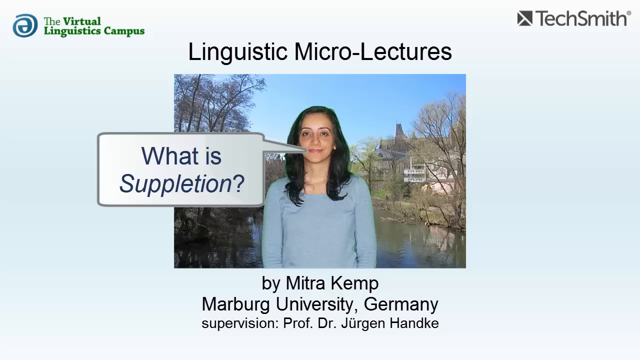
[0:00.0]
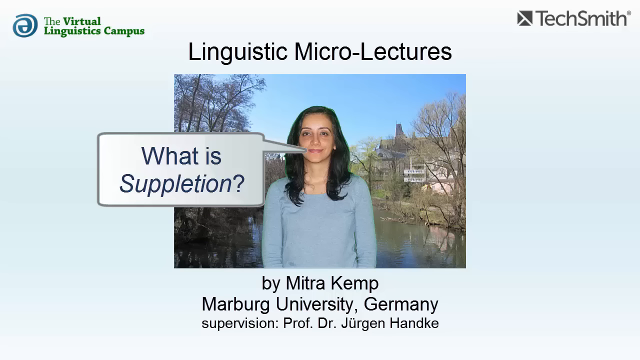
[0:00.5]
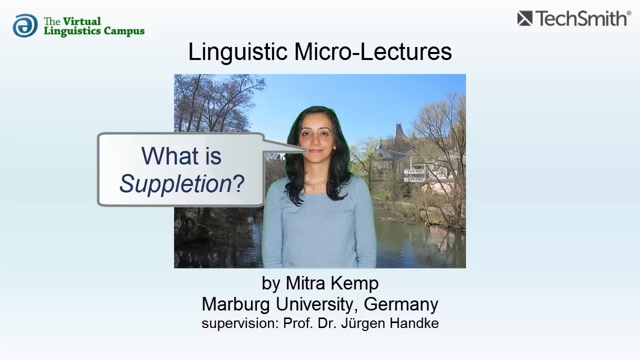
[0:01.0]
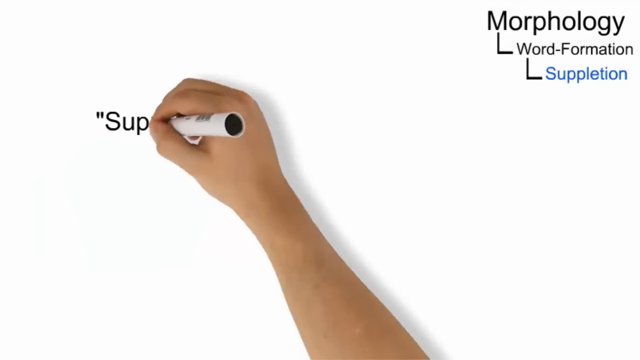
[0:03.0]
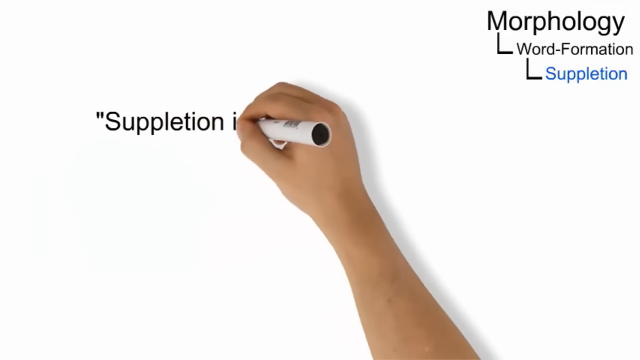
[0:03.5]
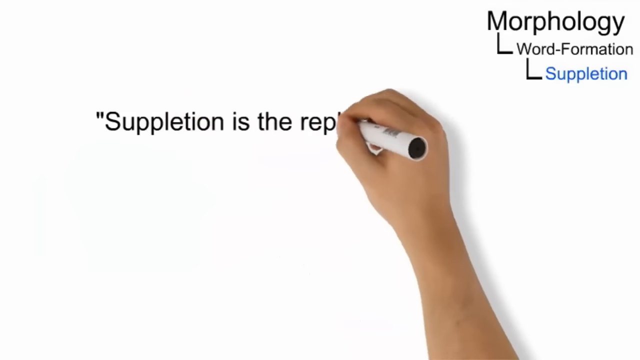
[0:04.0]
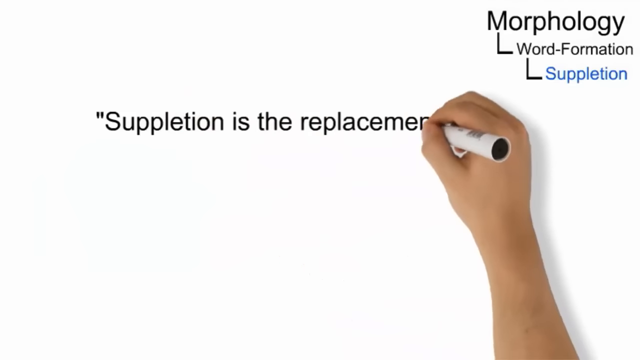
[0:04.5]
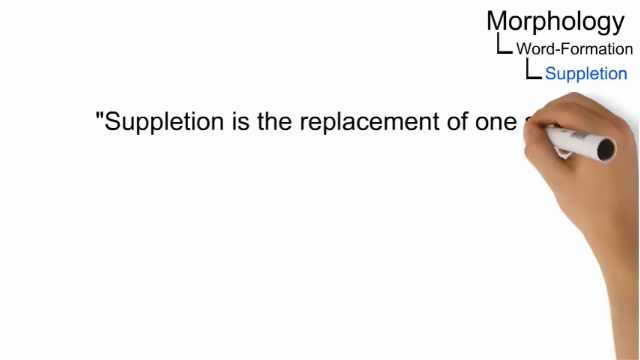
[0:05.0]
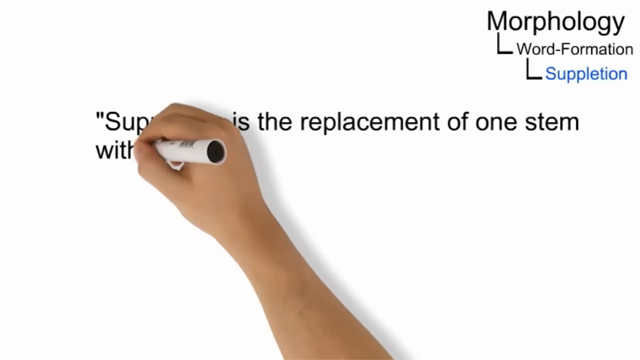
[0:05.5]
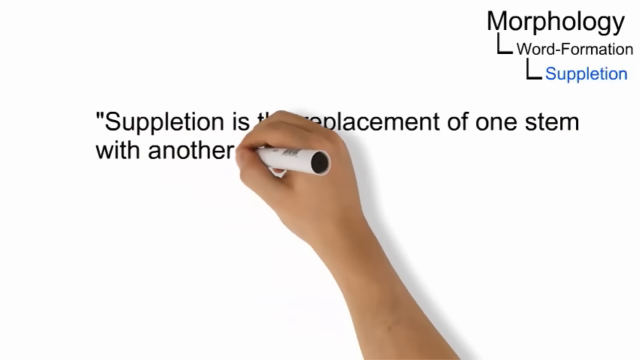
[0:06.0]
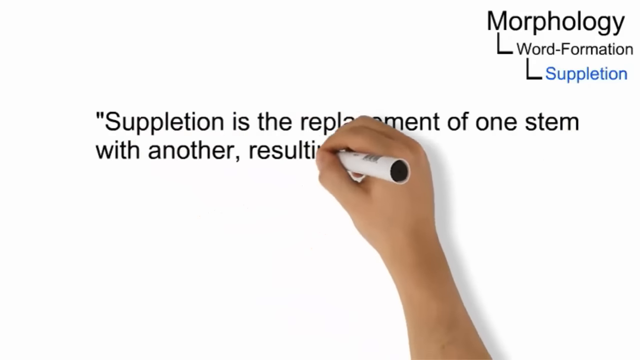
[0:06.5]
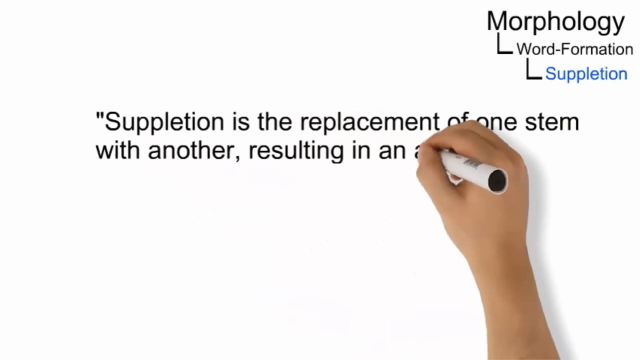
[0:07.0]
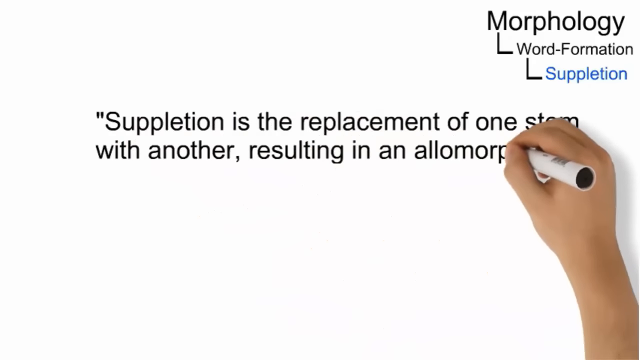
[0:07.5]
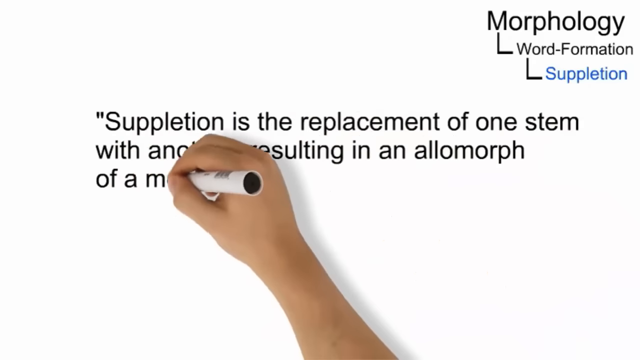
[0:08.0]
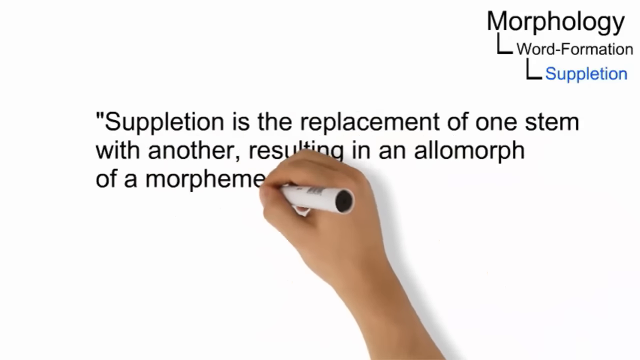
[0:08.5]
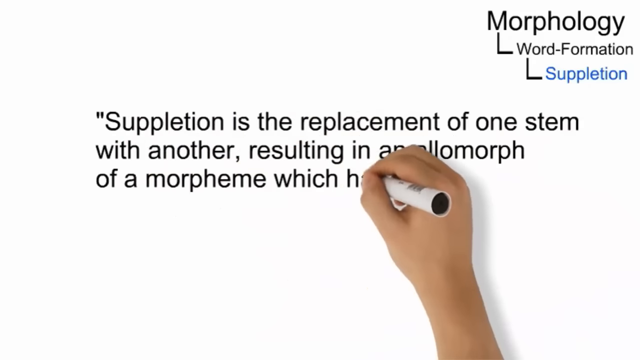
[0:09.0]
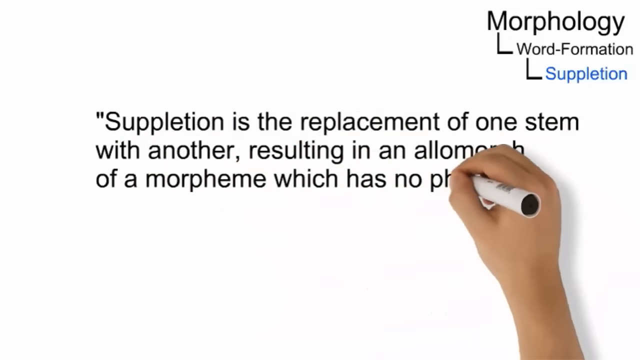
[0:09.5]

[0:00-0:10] Written information identifies the lecture as created by Mitra Camp of Marburg University in Germany, under the supervision of Professor Dr. Jurgen Handke. At the top of the video is the text "Linguistic micro lectures." A hand writes notes on a chalkboard with a white pen; the board is made of white material. The sentence being written reads "suppletion is the replacement of one stem with another, resulting in an allomorph."